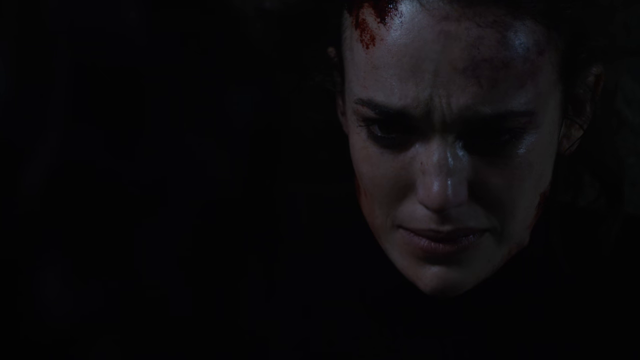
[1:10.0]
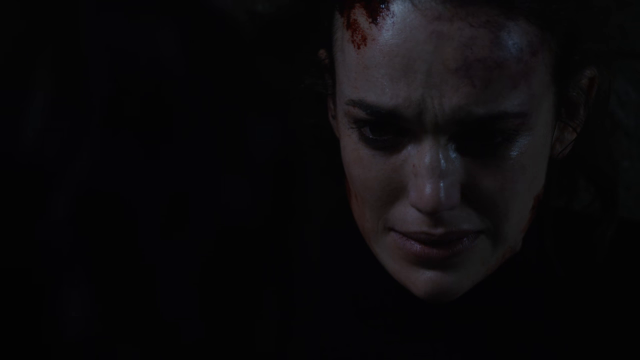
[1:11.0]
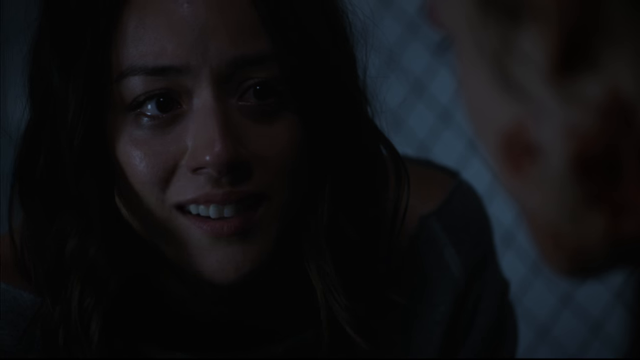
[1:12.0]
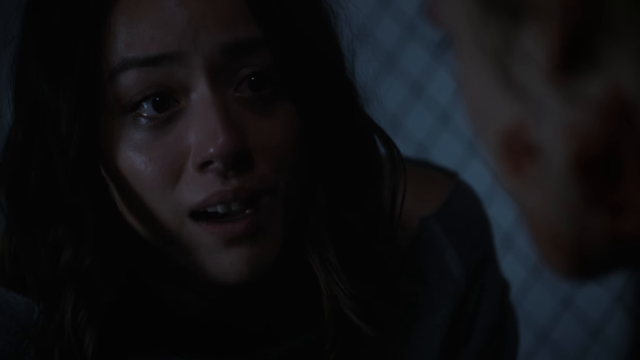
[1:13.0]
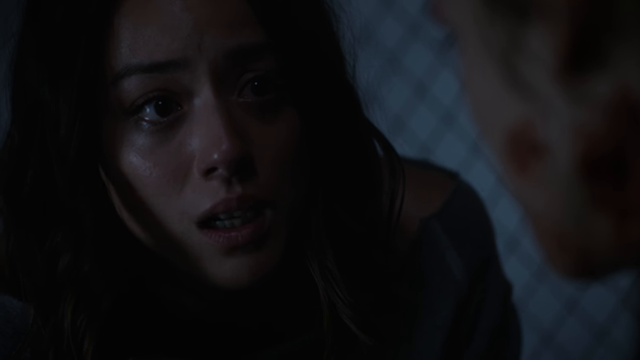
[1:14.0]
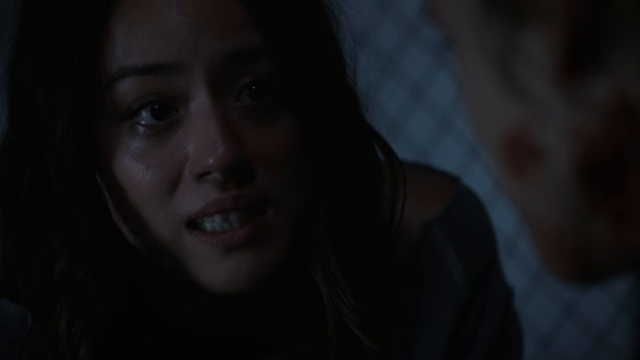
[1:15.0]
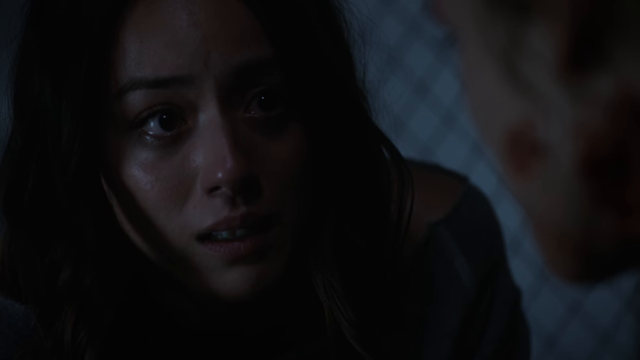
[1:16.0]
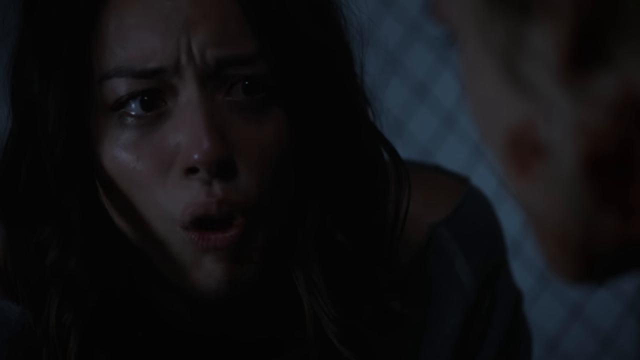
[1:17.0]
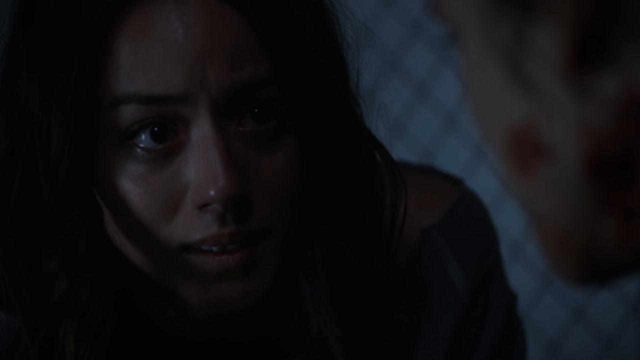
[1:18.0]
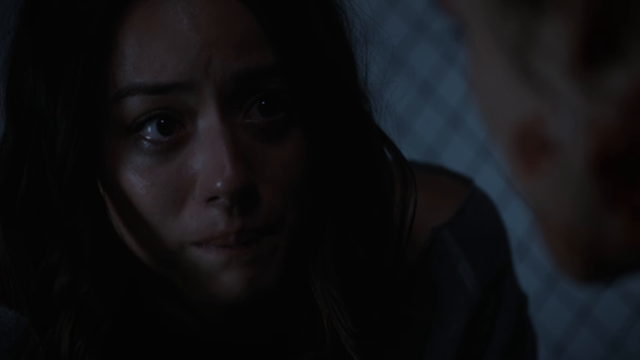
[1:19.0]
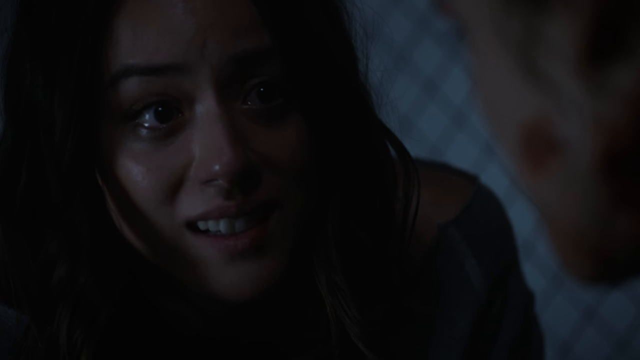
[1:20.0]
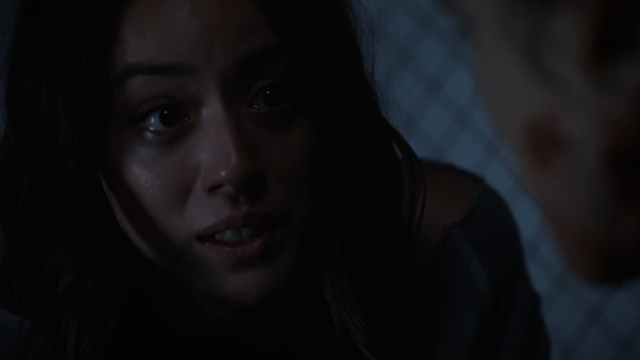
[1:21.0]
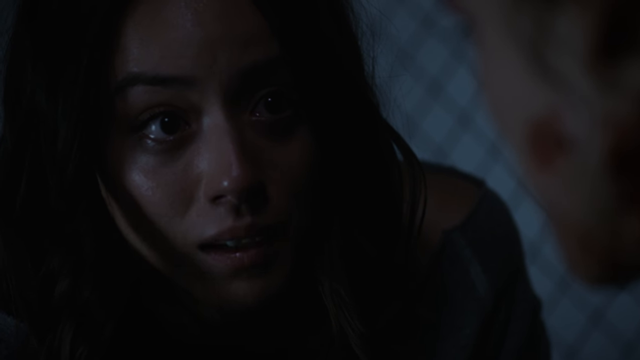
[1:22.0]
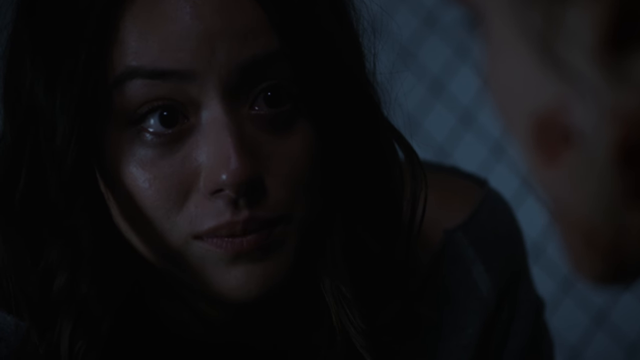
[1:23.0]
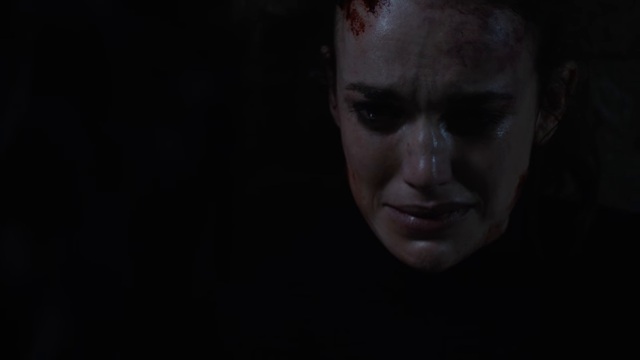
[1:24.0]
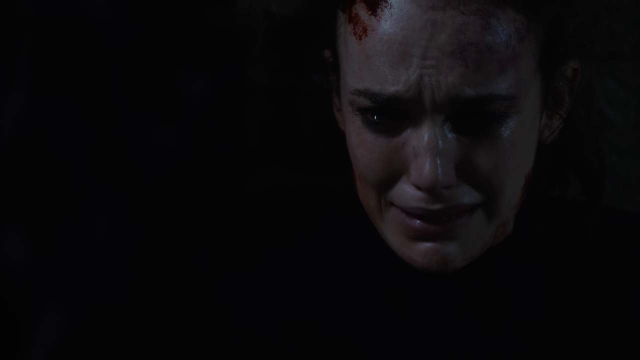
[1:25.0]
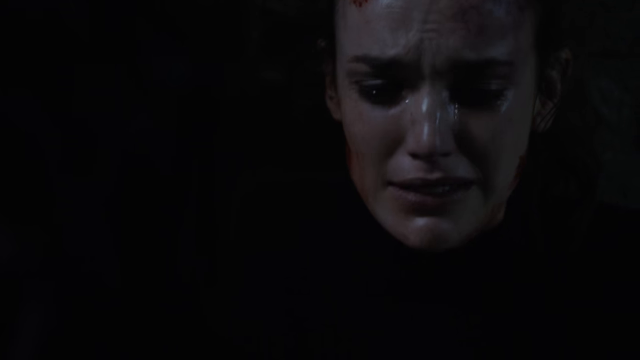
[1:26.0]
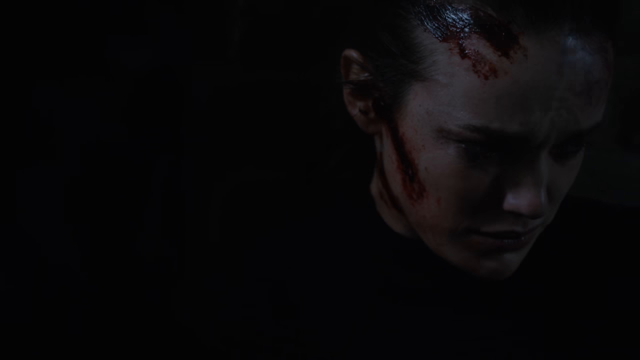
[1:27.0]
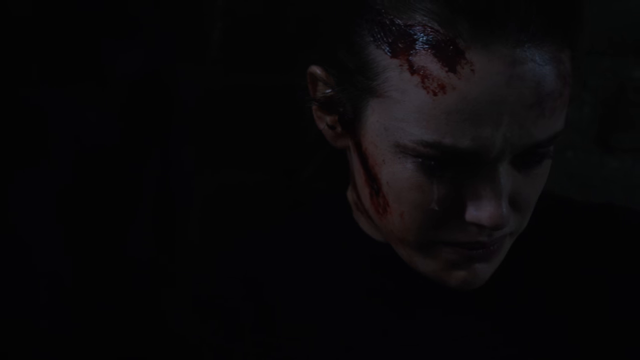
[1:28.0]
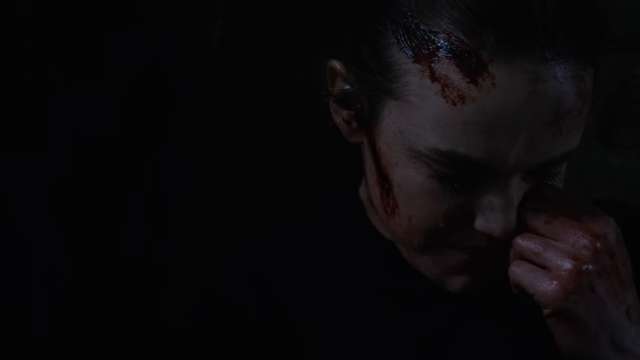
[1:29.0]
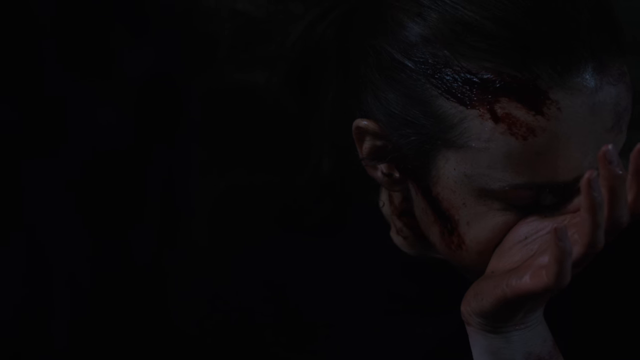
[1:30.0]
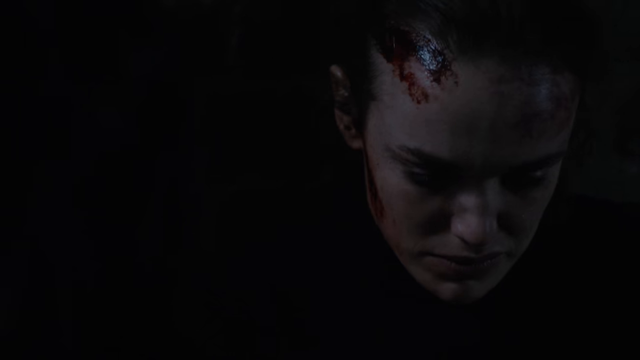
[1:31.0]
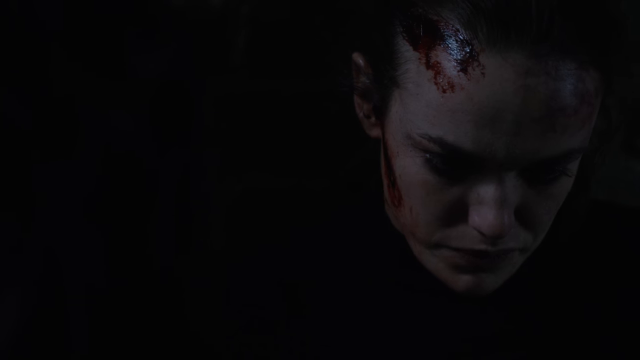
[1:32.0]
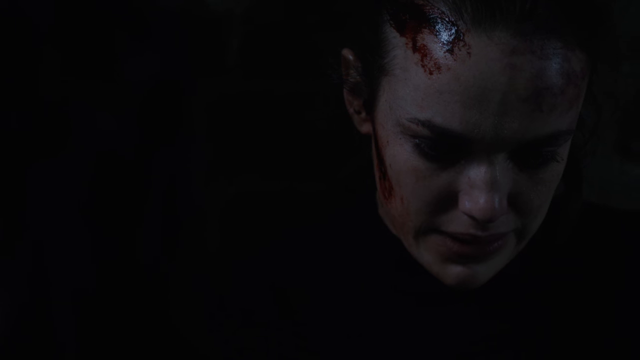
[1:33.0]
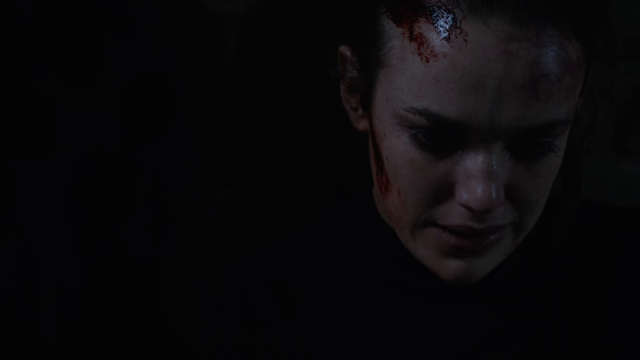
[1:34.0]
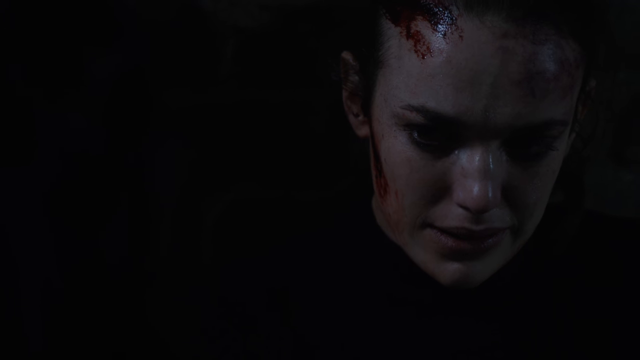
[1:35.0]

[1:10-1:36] The conversation continues. The woman in blue, whose sweater hangs off her shoulder, is still kneeling; she seems very in control and methodical in how she speaks and makes eye contact with the other woman. The other woman is still sitting on a bench or something against the brick wall, with blood on her face, heavily smudged makeup, a face that looks kind of oily, and dark clothes. She is very emotional: a tear now falls, and as she responds she reaches up and wipes away heavy, almost raindrop-like tears from her eyes and face. Most of the time while talking she looks down, occasionally looking back up at the woman. It is hard to tell whether she is upset, guilty or fearful.